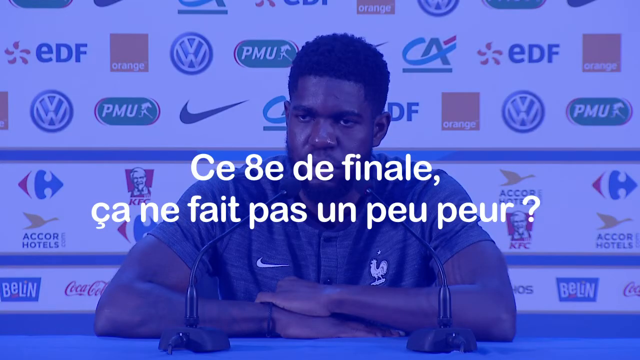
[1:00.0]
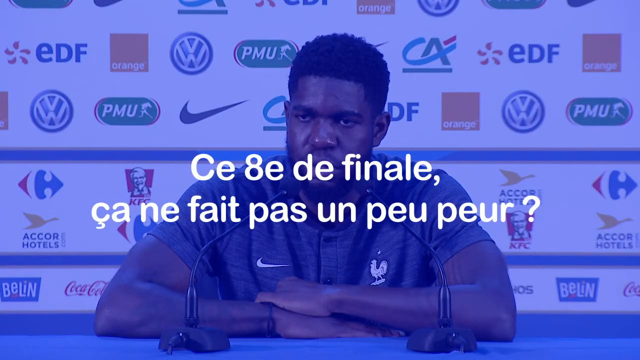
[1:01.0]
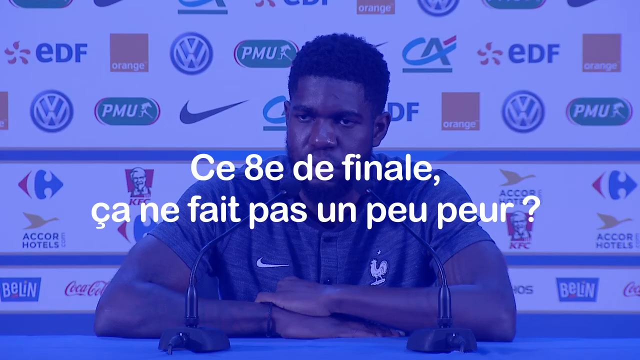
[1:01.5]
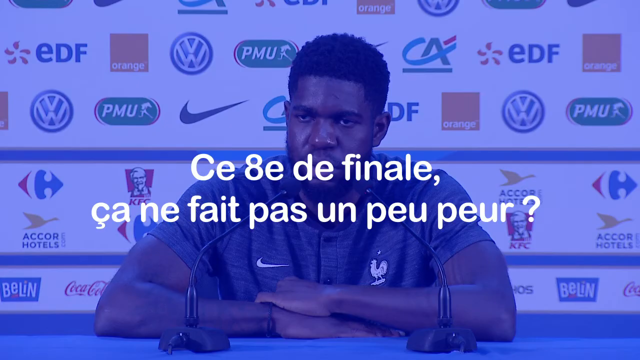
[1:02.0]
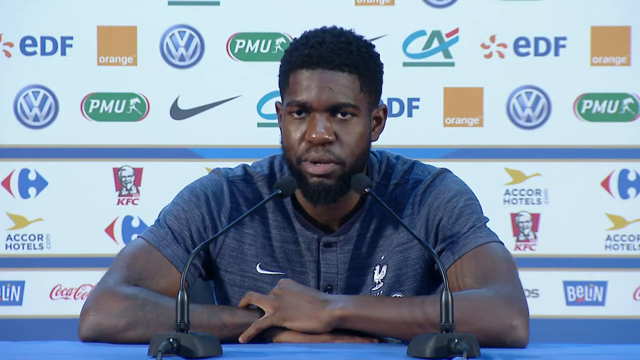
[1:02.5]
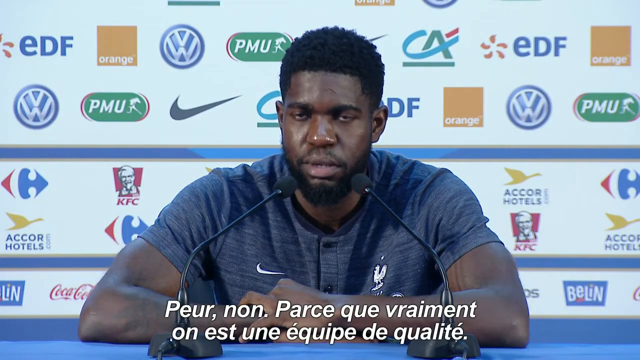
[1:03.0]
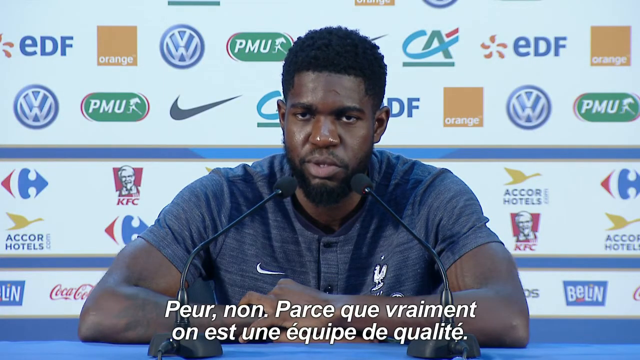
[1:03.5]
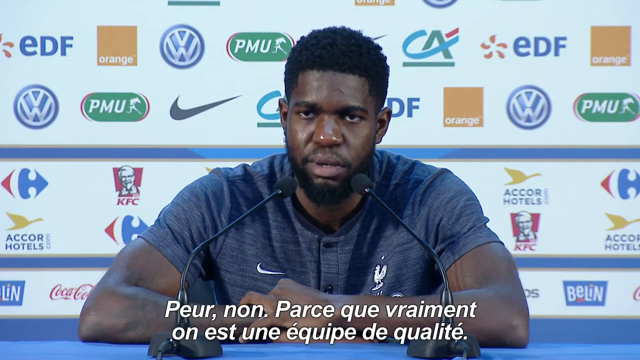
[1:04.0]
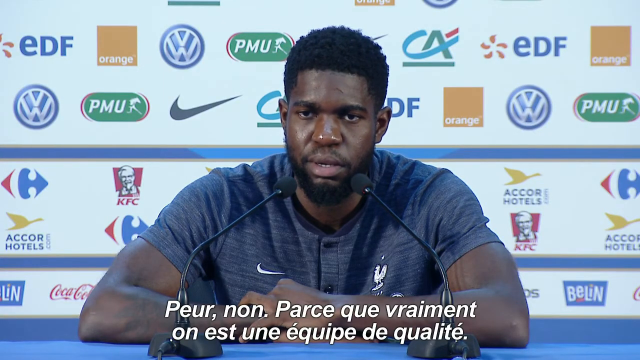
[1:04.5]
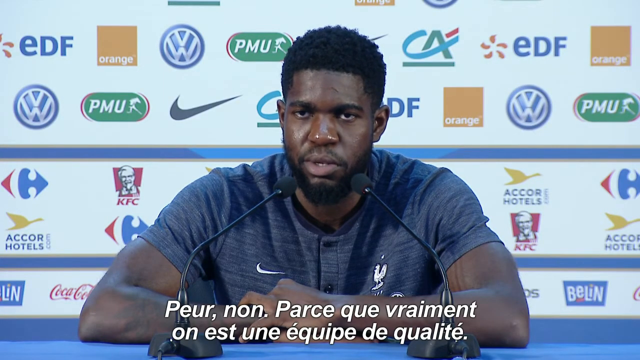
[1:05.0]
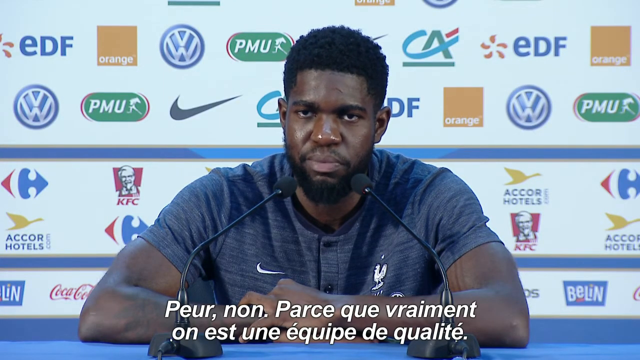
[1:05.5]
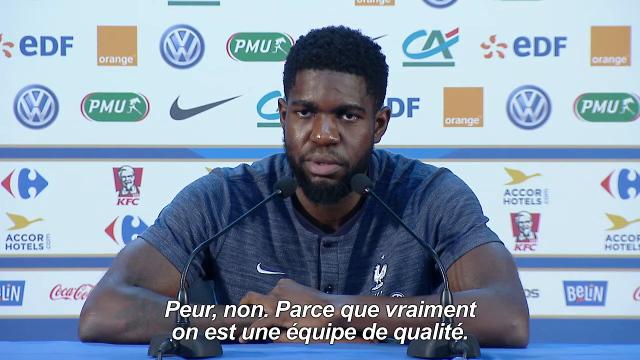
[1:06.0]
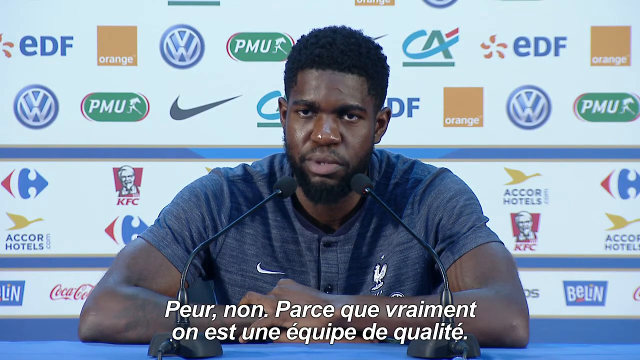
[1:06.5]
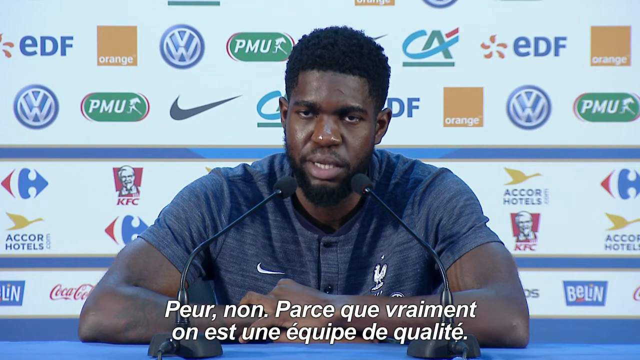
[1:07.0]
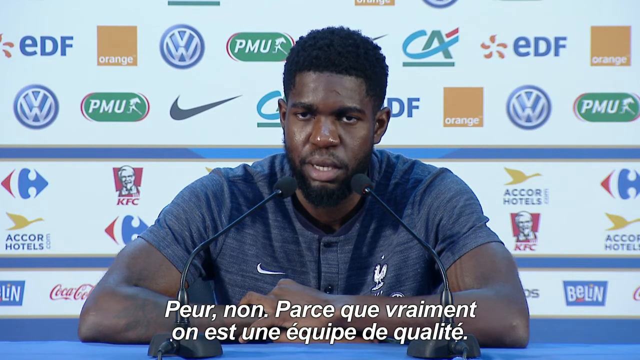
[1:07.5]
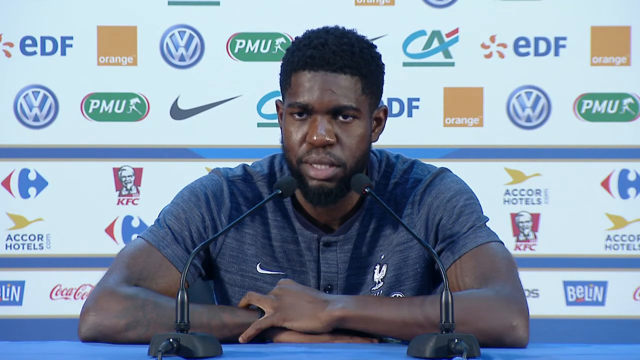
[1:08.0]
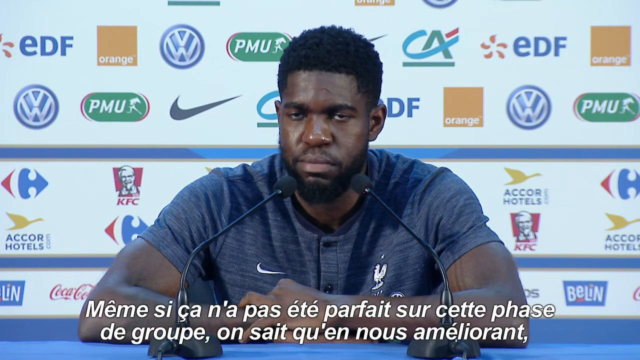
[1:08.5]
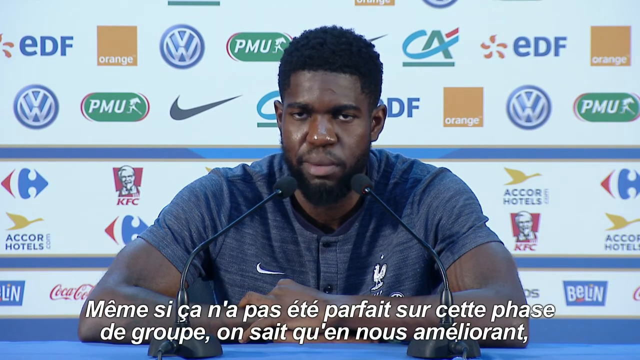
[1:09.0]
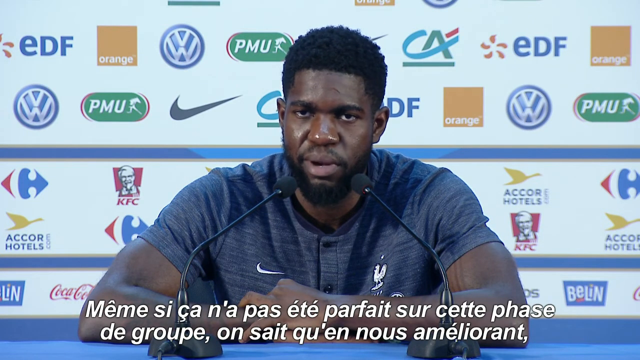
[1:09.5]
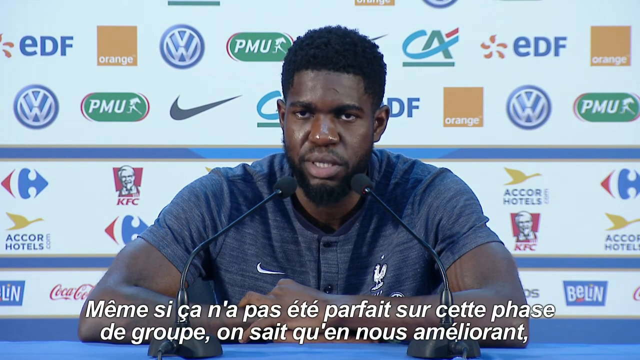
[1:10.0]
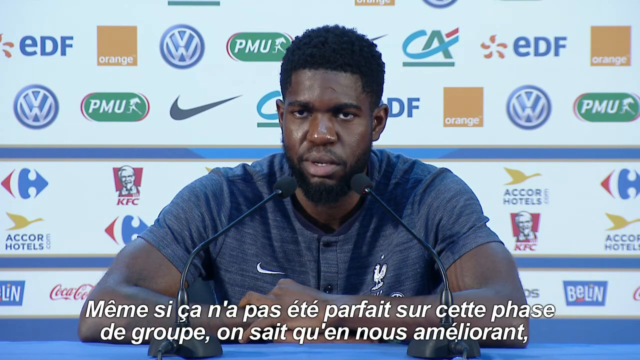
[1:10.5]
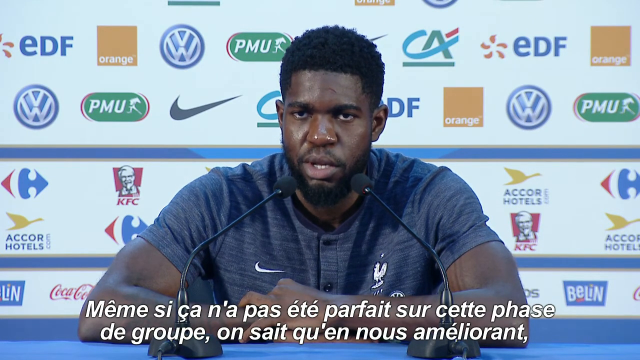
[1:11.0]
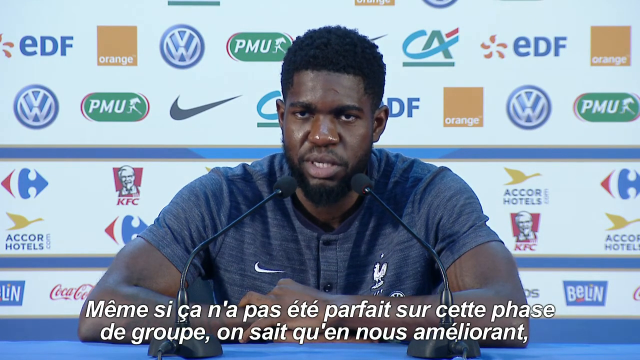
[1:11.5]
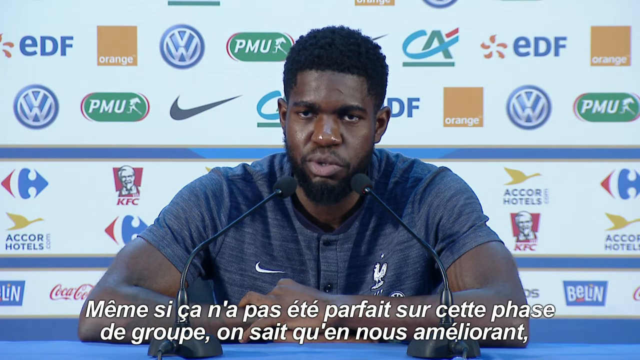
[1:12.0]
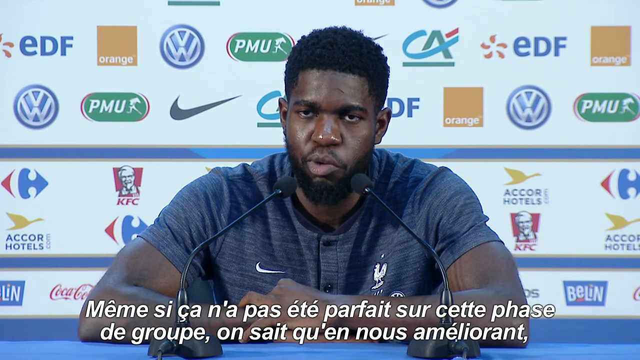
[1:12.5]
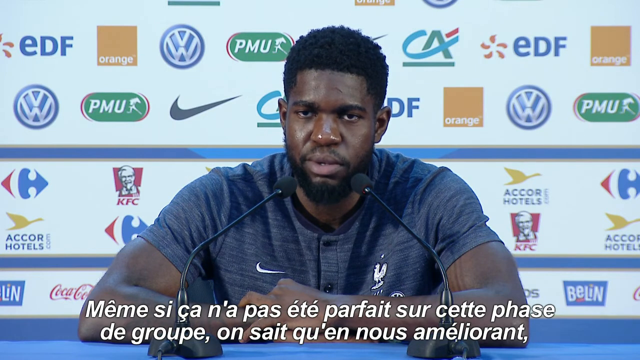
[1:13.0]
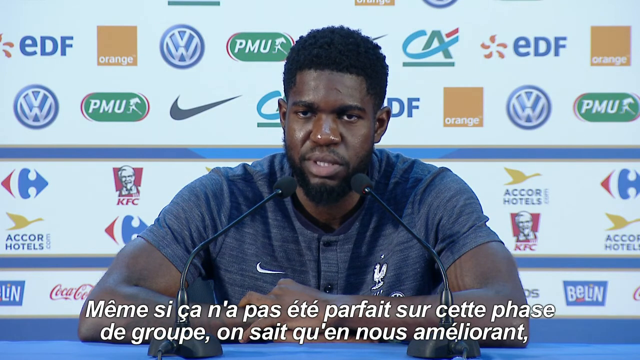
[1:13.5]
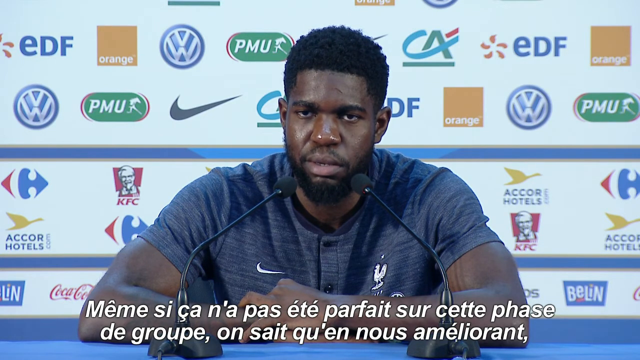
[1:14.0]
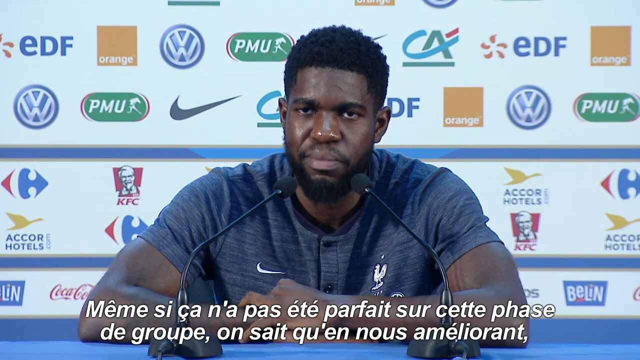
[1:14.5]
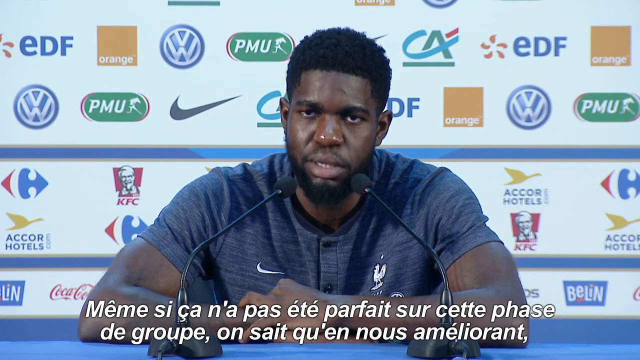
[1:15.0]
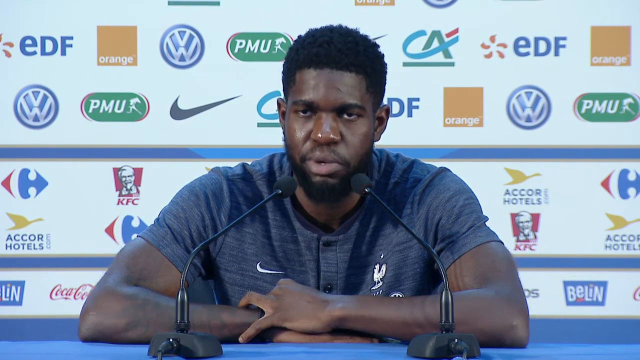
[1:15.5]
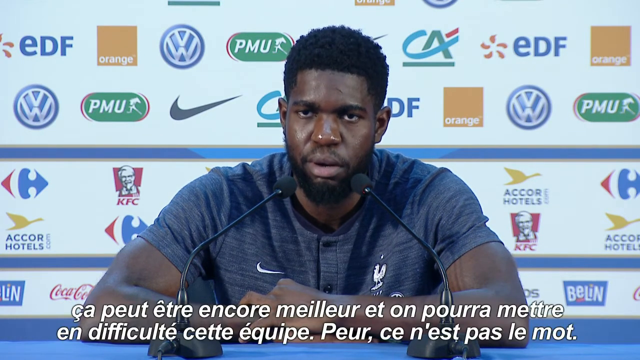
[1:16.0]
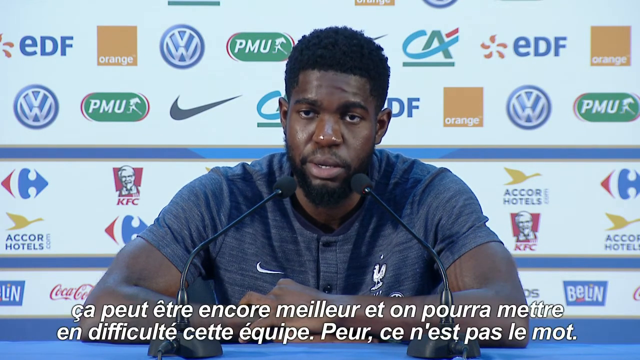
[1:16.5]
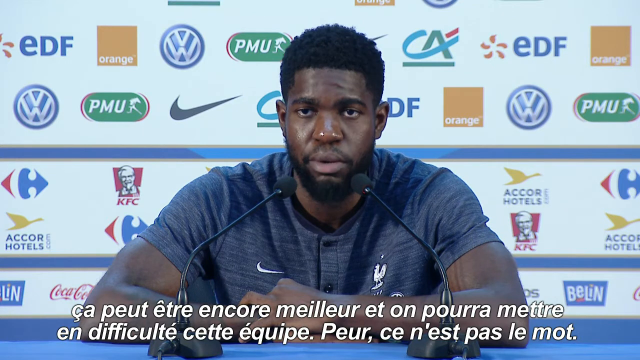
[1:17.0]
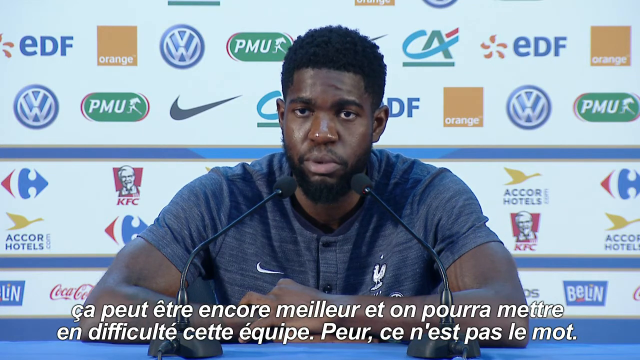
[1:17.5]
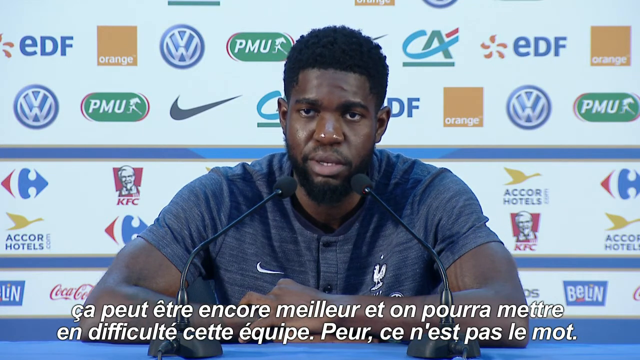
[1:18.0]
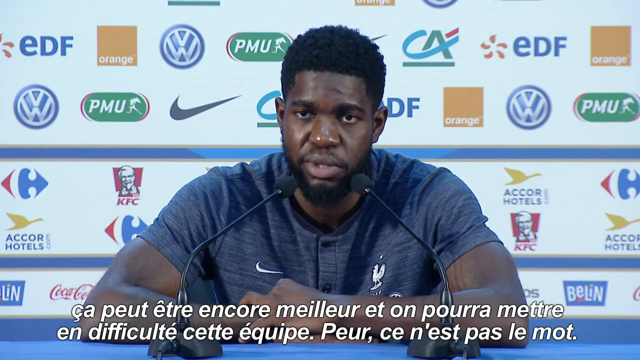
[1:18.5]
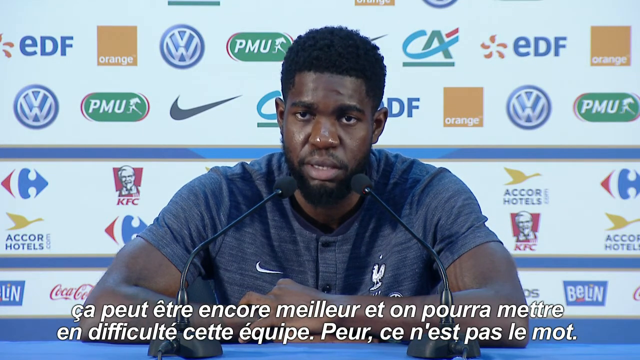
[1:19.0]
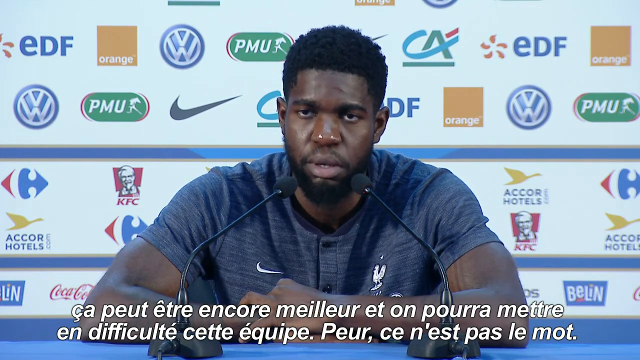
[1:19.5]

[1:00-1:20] The screen shows a question on a blue background, then goes live. The player still has his left arm over his right and is slightly hunched over, looking straight forward between the two microphone heads. He closes his eyes and drops his head as he talks, then looks up. The crease between his eyes at the bridge of his nose is pretty deep as he looks very sternly. He barely opens his mouth when he talks, showing just a little of his teeth; it forms something like an O and then stays slightly open. He gives a very subtle nod to the right with a slight facial jerk on the right side, and as he talks the right side of his cheek creases more than the left, while the lower left side of his jaw kind of goes in a little. He hardly moves his head, looking straight forward at the reporter, then gives a slight head nod. His eyes open wider with creases on his forehead, his mouth slightly open, then his lips come together almost in a pucker. As he talks there is a slight bulge in each of his cheeks. He pauses for a second to listen, then shakes his head, his eyes wide, and responds.